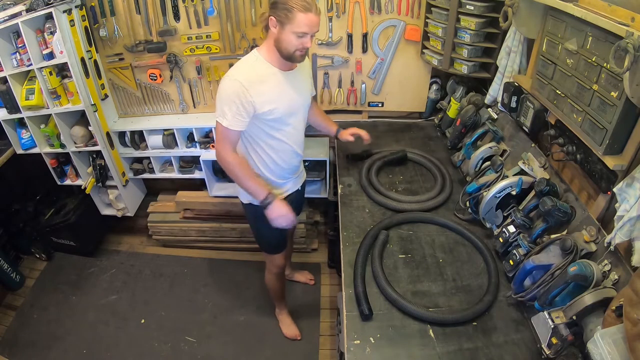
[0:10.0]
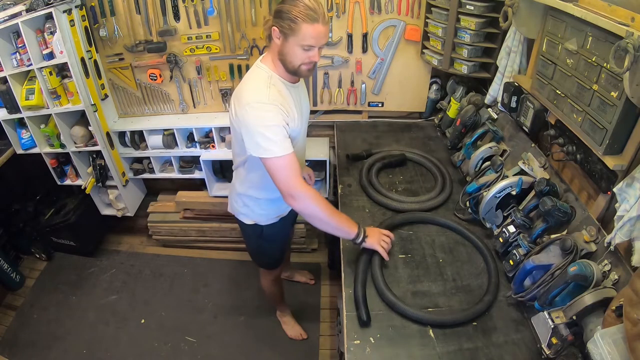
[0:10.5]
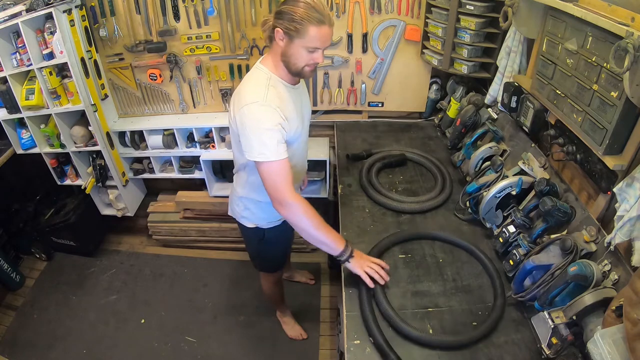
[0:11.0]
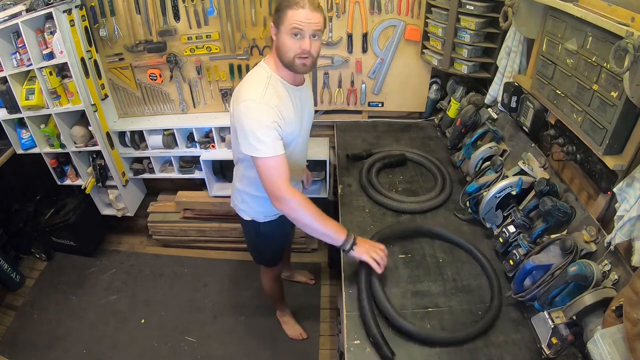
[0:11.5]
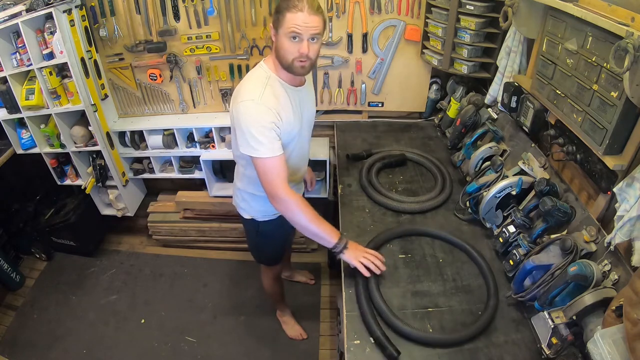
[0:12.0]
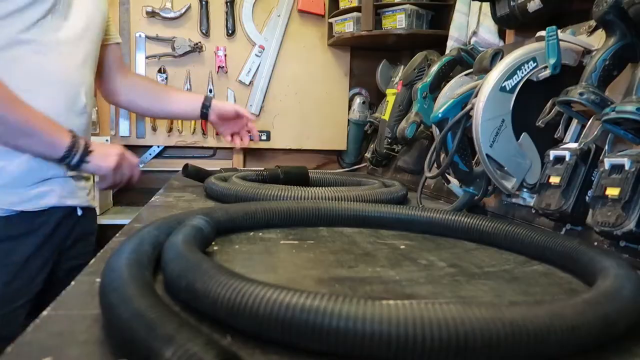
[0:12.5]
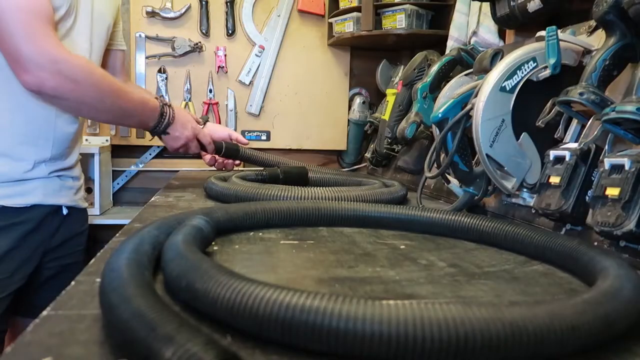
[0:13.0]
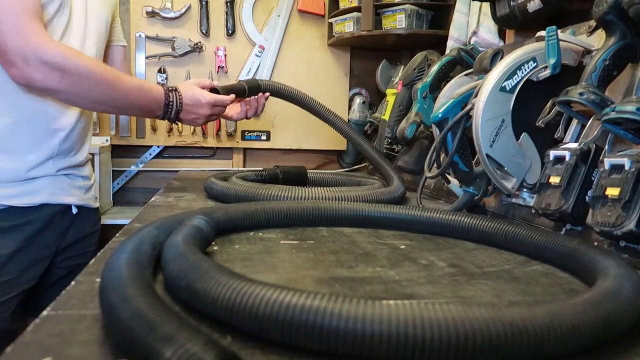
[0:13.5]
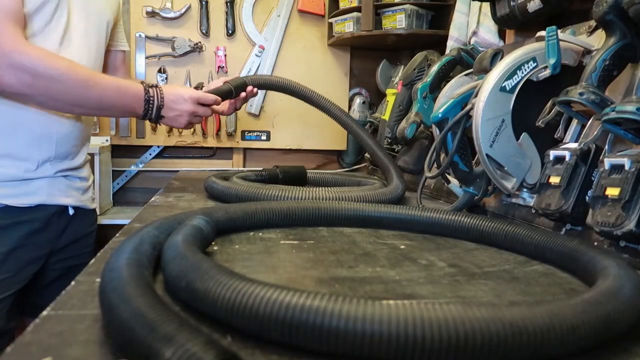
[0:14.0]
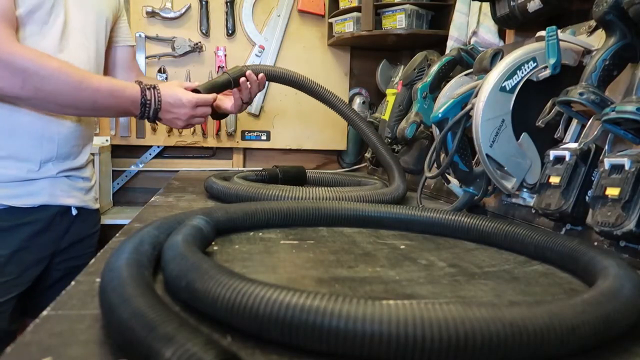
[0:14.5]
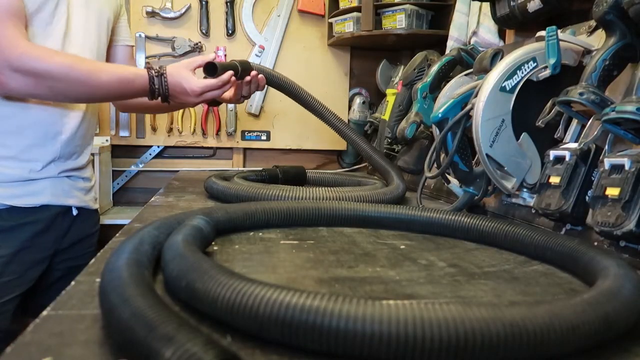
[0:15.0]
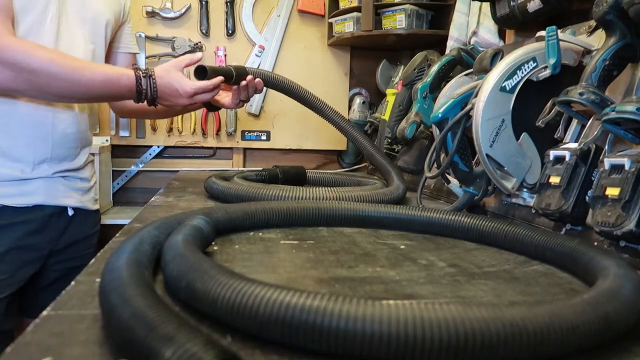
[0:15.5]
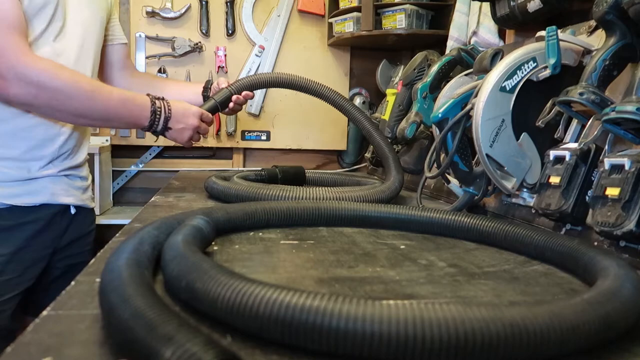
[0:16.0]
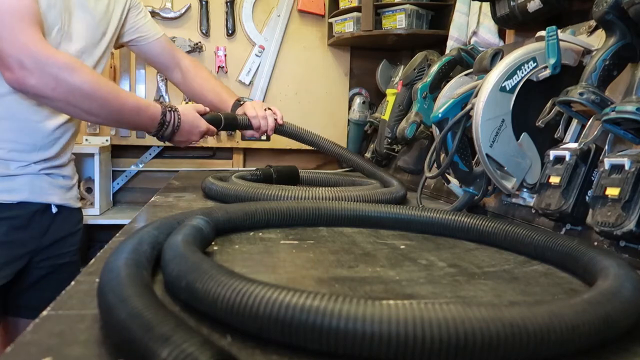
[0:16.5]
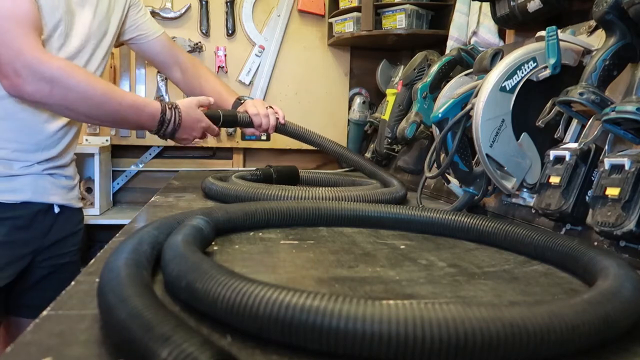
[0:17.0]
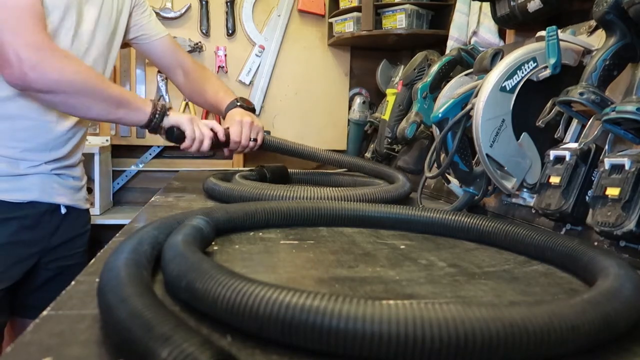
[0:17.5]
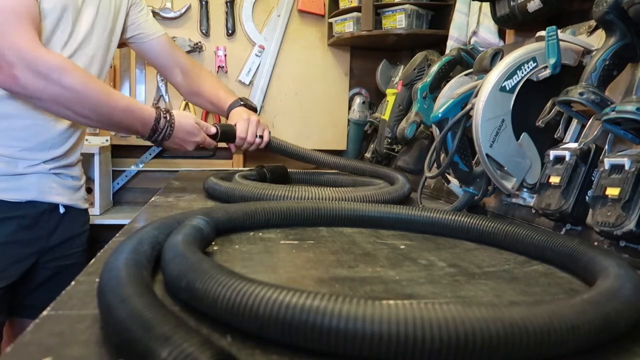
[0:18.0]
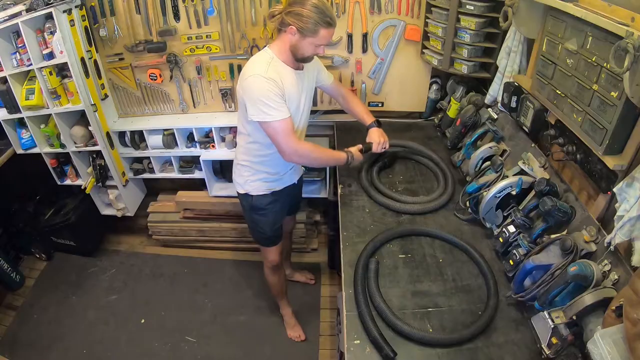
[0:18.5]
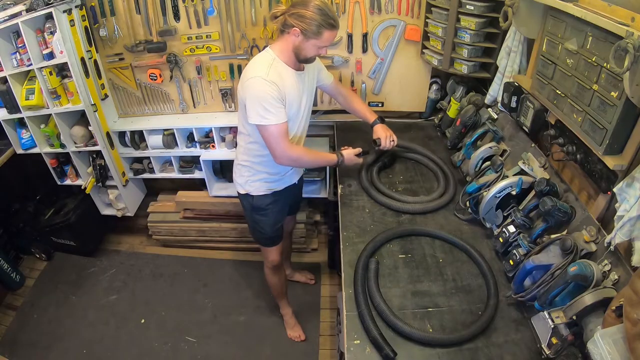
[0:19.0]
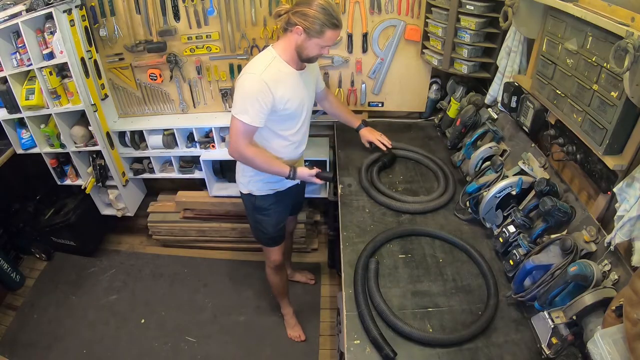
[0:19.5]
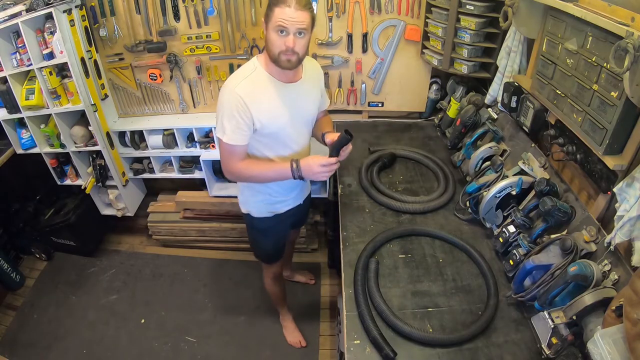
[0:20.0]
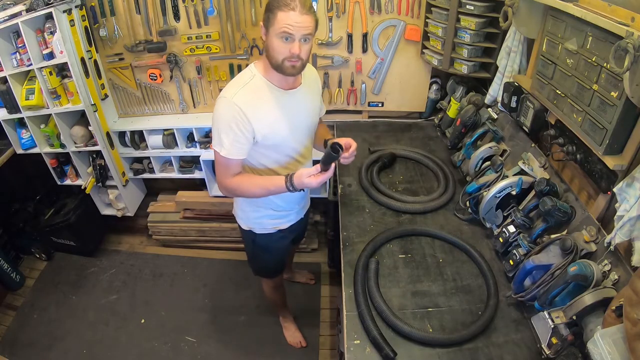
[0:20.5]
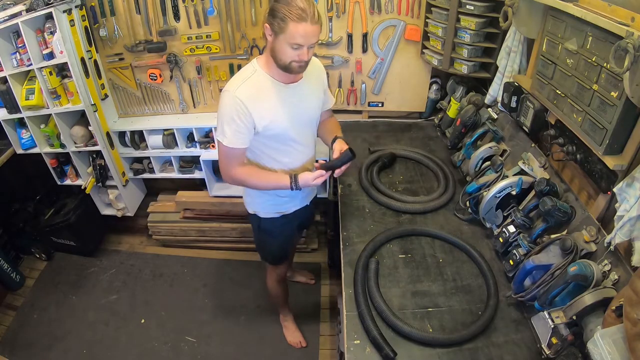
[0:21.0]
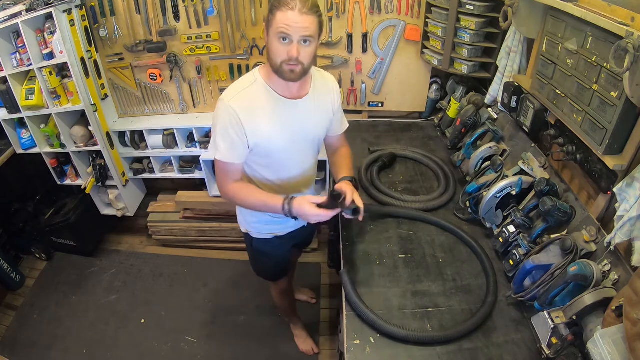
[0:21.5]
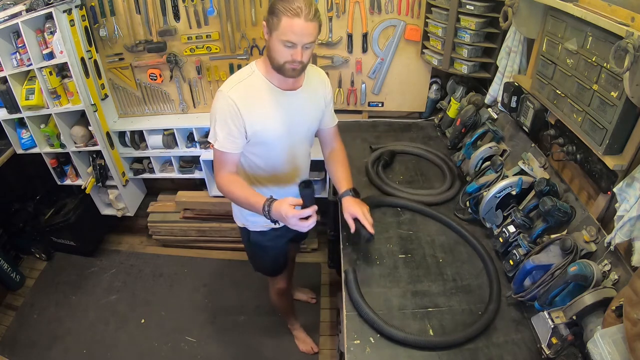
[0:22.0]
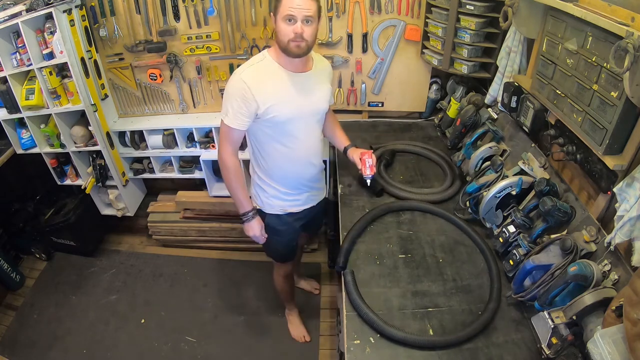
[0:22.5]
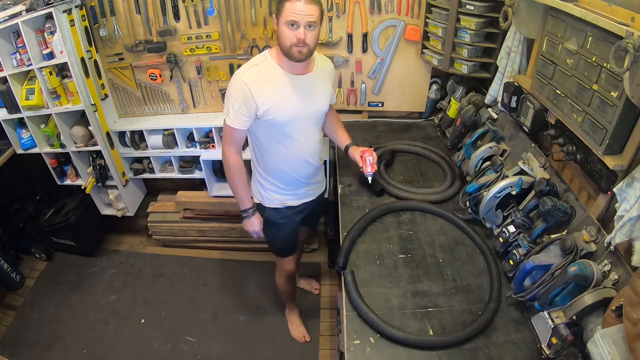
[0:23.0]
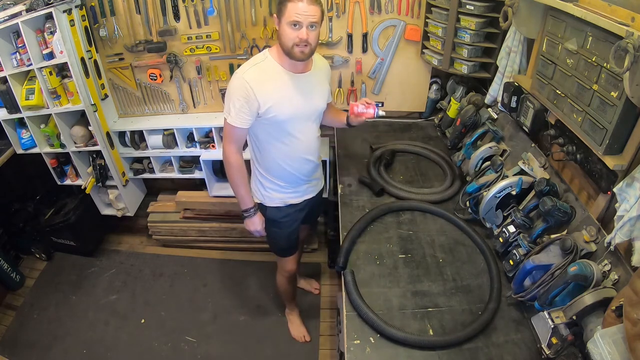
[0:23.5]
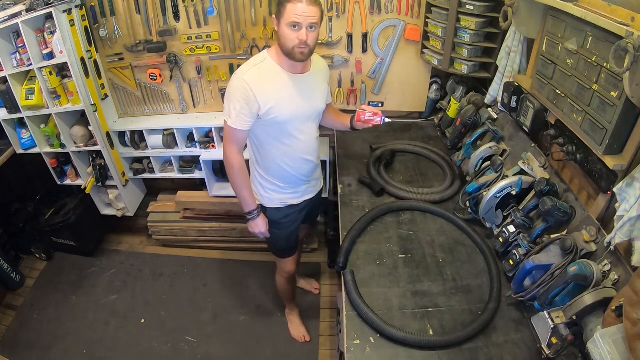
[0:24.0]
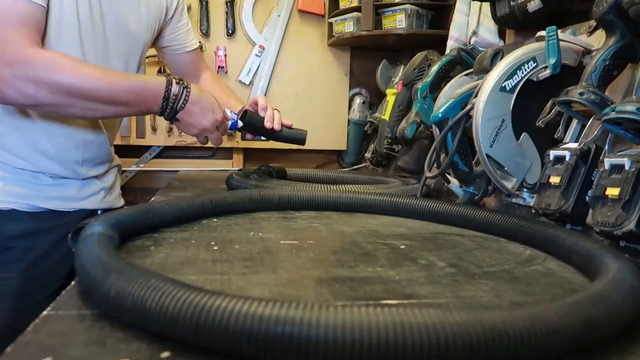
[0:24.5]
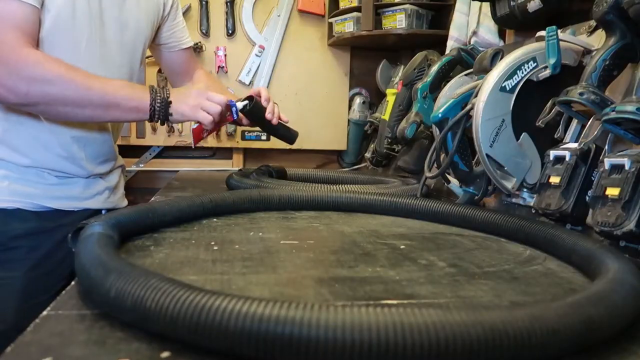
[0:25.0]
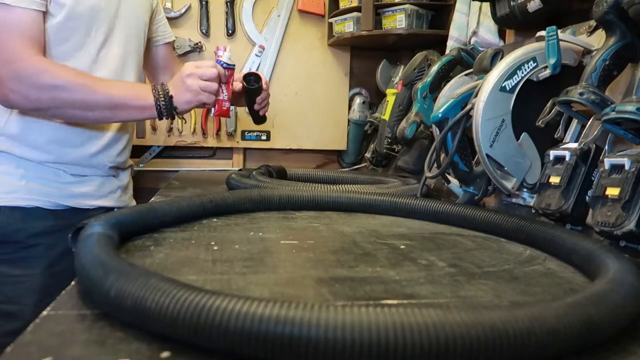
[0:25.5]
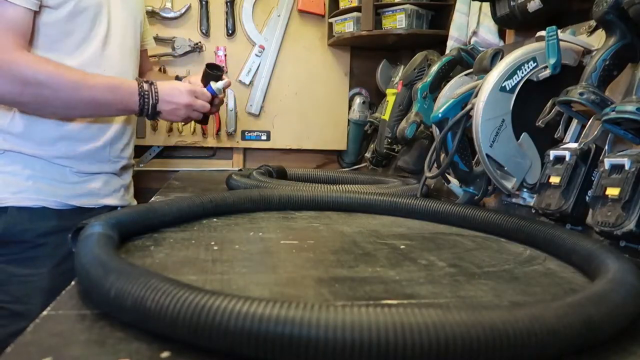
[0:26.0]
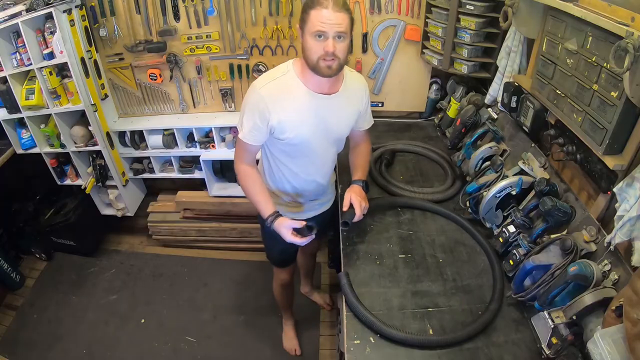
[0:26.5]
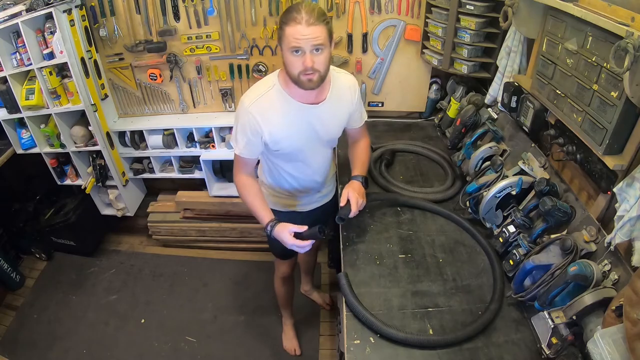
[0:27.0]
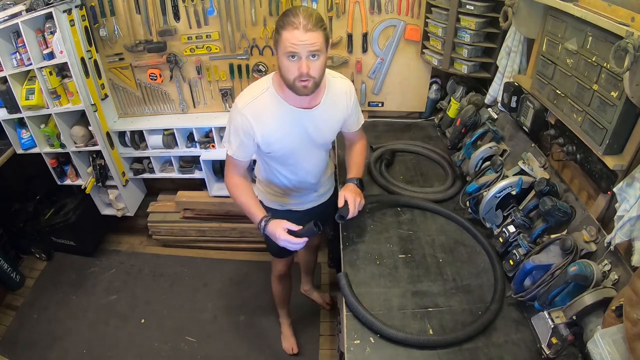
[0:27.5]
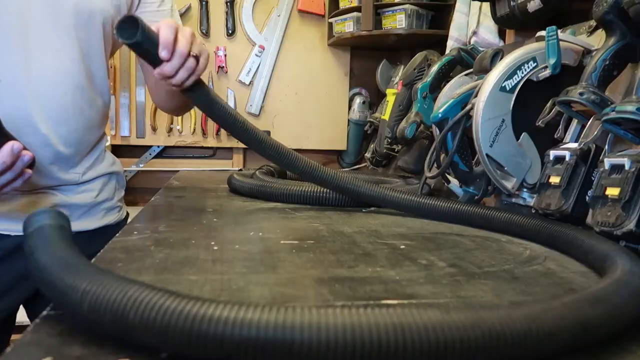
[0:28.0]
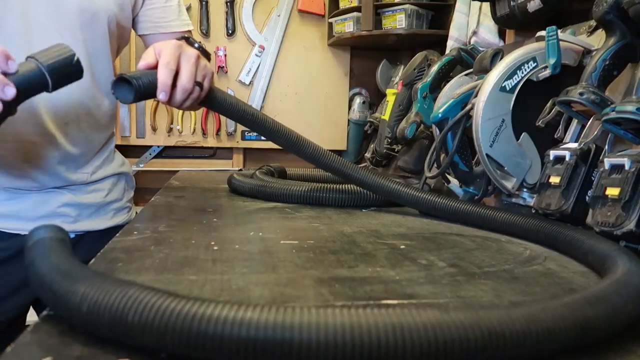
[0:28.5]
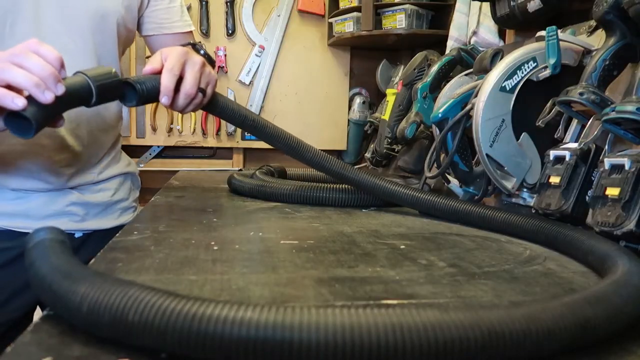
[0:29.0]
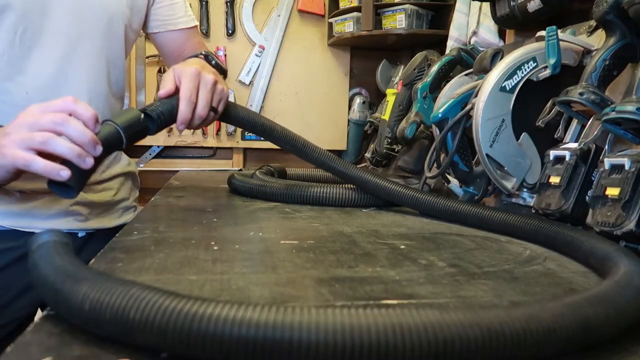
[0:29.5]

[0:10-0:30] The man touches the right-side hose, grabs it with his hand, and places it back down. The angle then shifts to the bench itself, so only his arms are visible. He picks up the left-side hose and touches its plastic fitting, holds it, and twists the cap or end off. He points that part at the camera, applies glue to its interior, and then puts it on the second hose next to him.